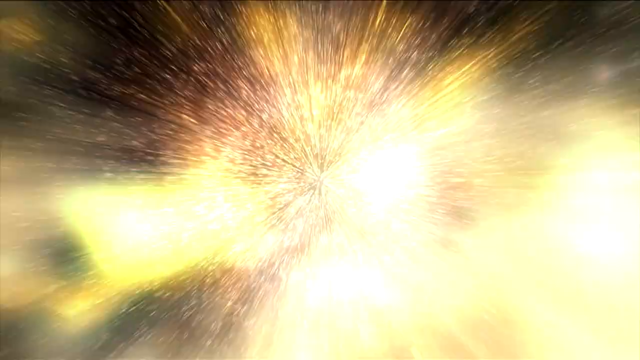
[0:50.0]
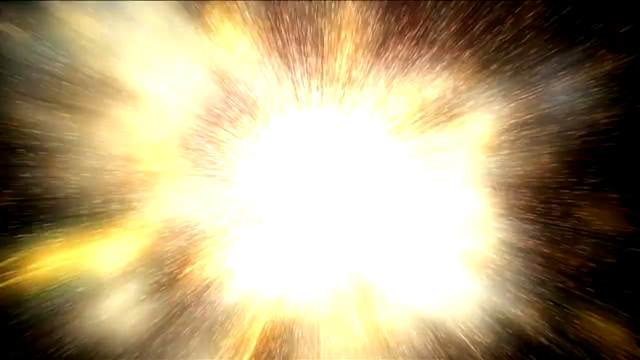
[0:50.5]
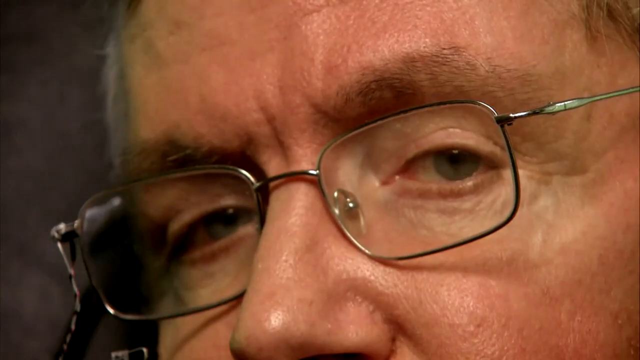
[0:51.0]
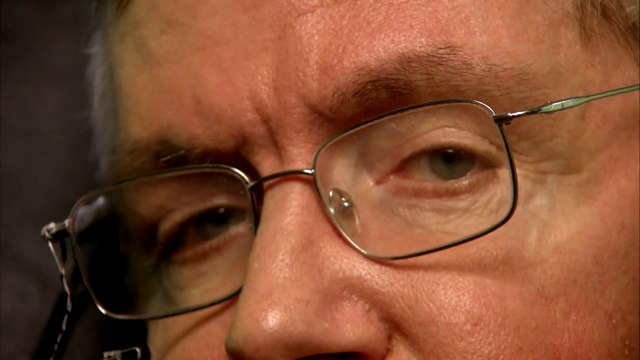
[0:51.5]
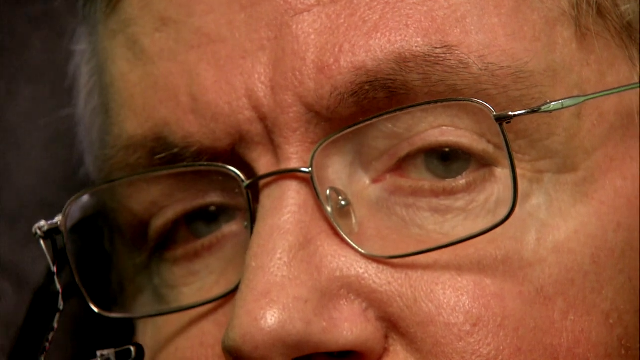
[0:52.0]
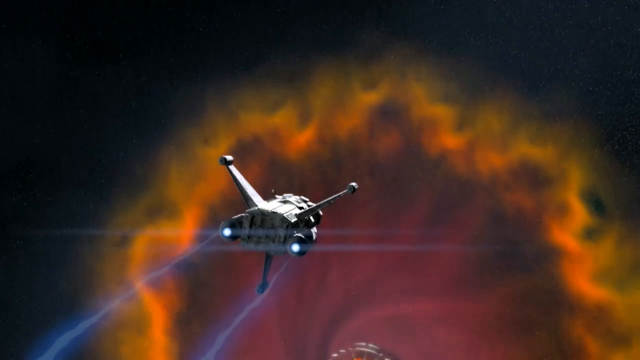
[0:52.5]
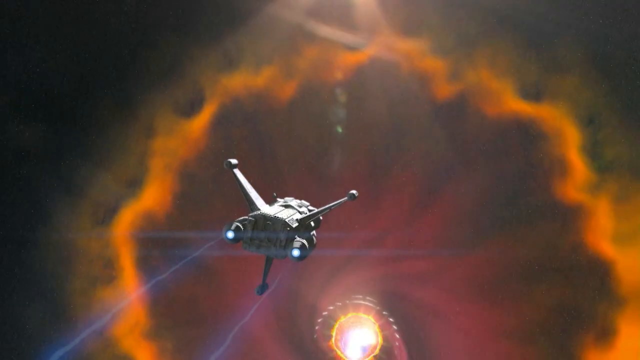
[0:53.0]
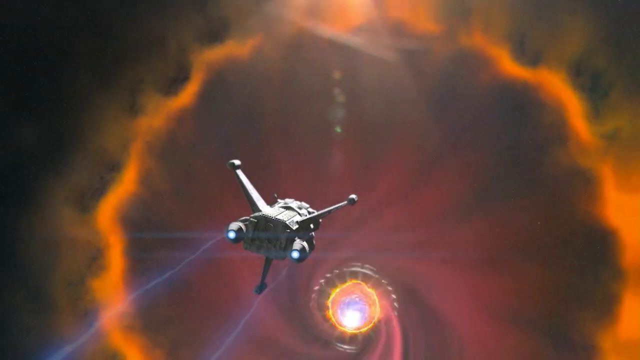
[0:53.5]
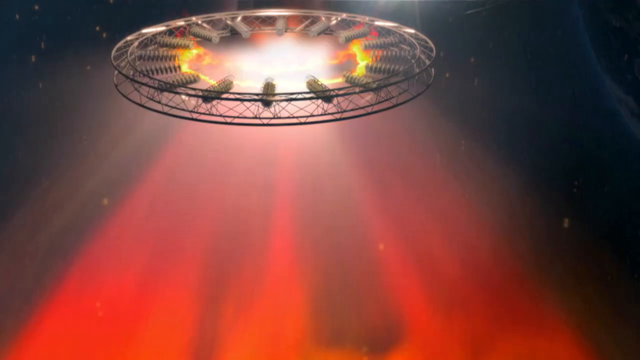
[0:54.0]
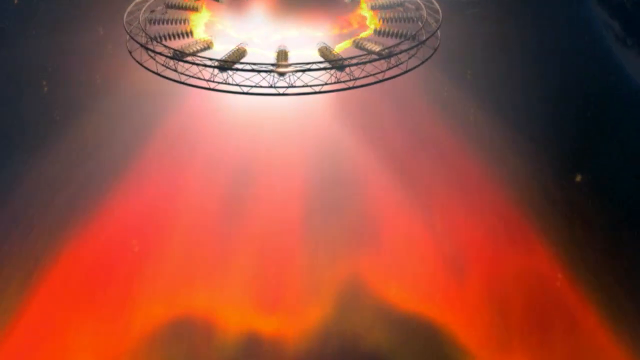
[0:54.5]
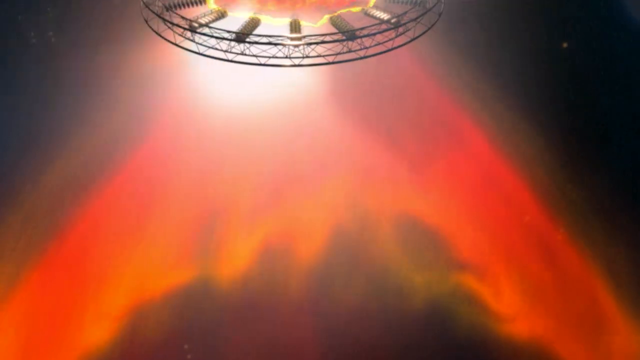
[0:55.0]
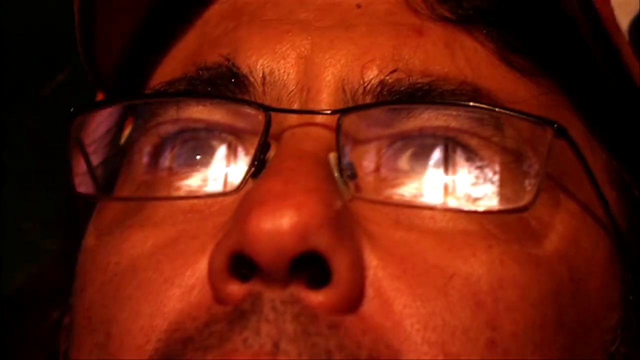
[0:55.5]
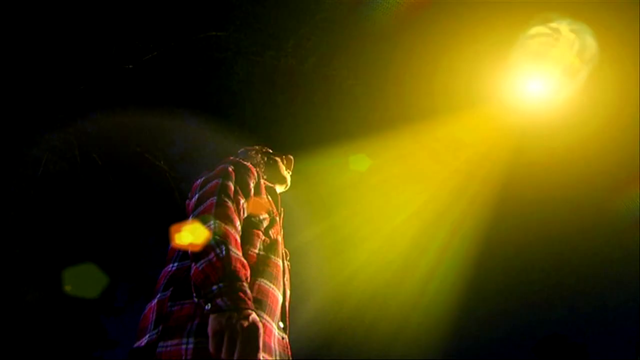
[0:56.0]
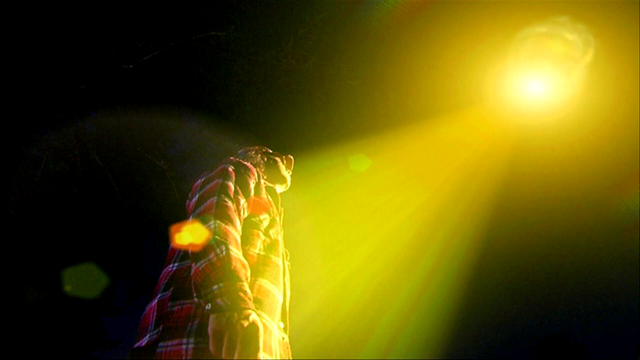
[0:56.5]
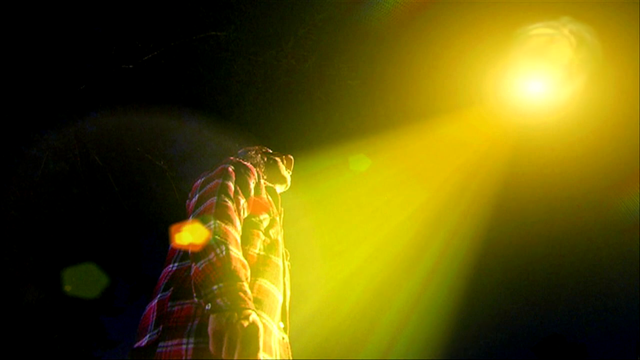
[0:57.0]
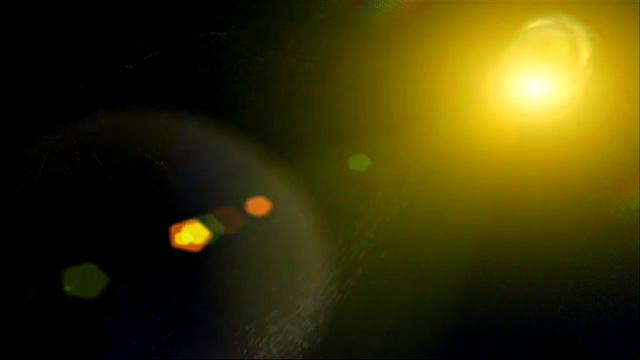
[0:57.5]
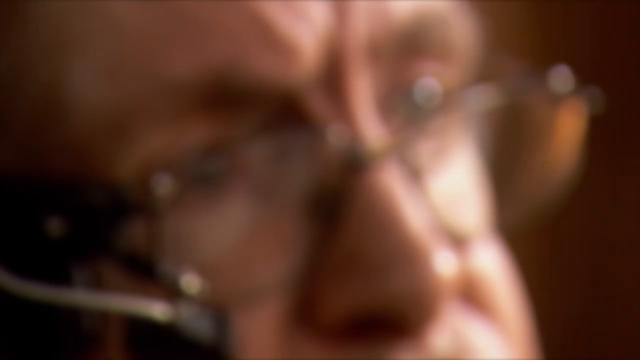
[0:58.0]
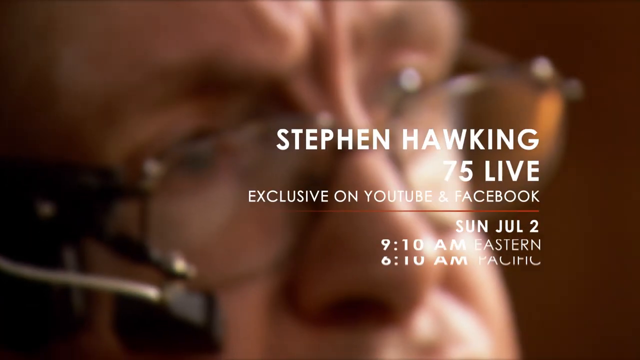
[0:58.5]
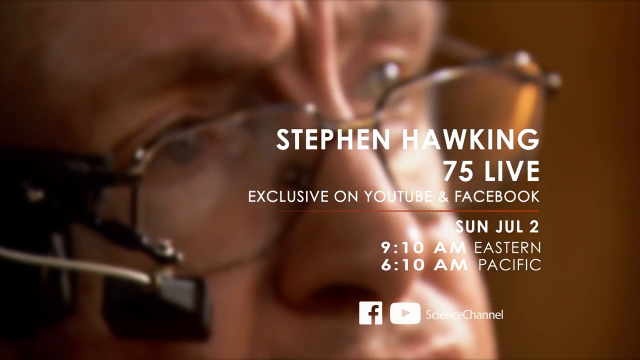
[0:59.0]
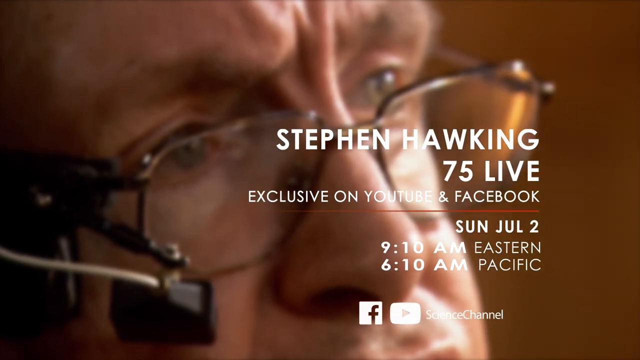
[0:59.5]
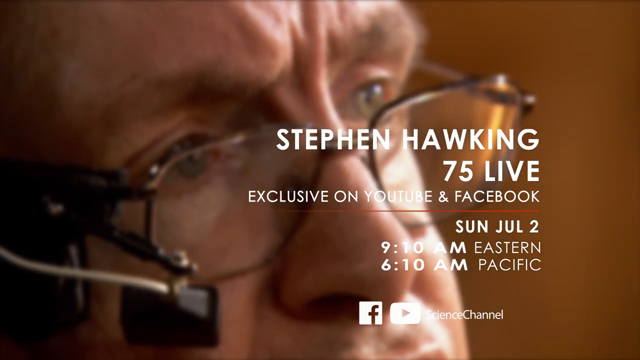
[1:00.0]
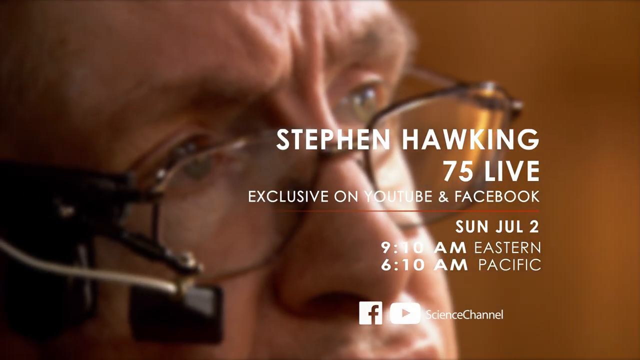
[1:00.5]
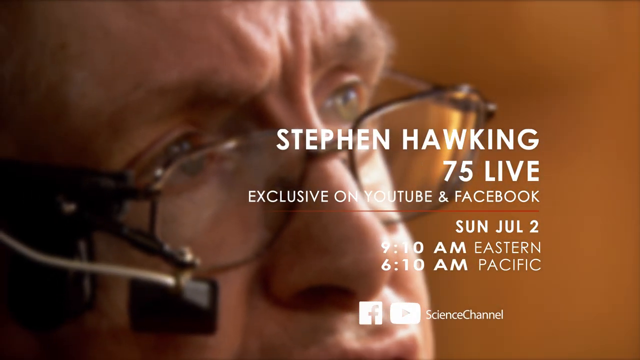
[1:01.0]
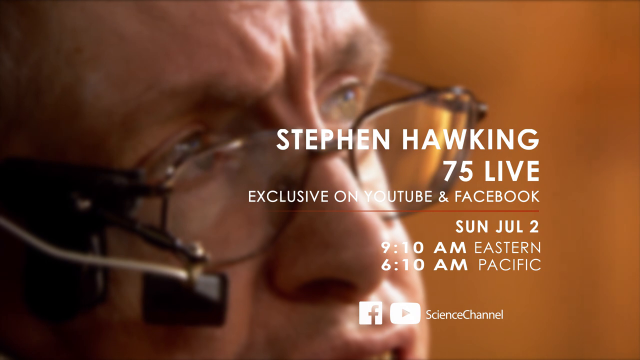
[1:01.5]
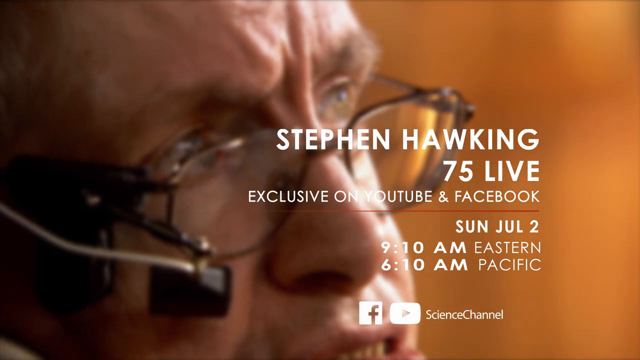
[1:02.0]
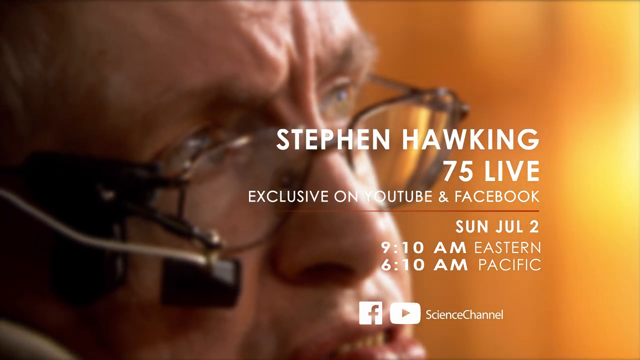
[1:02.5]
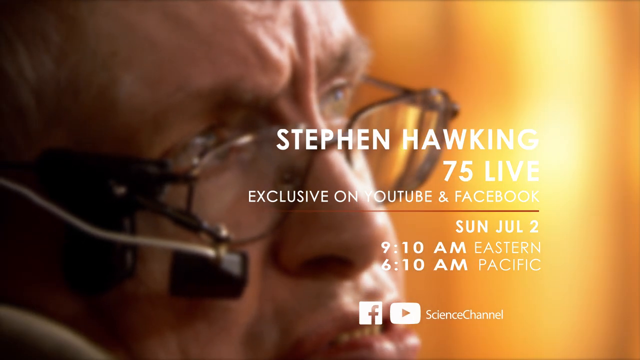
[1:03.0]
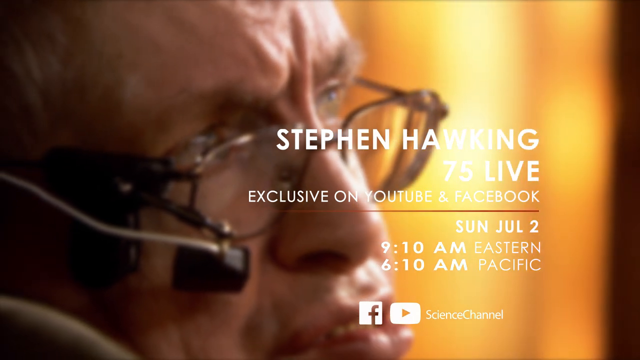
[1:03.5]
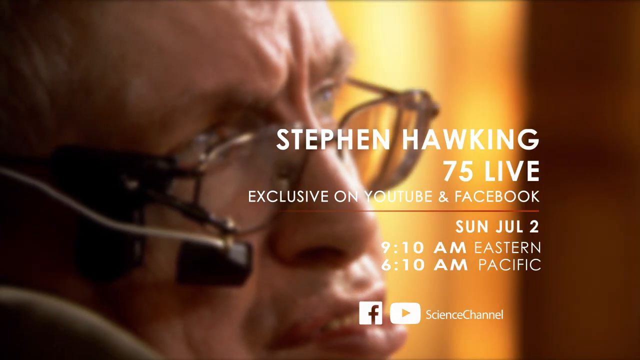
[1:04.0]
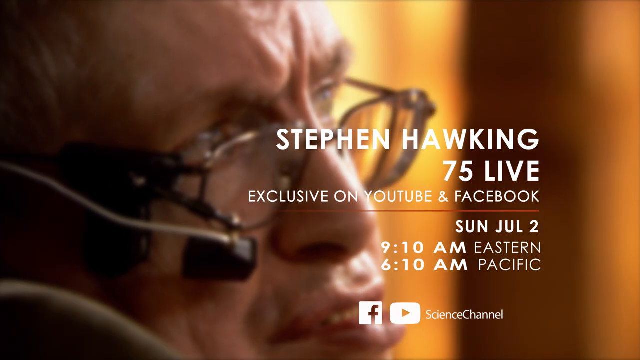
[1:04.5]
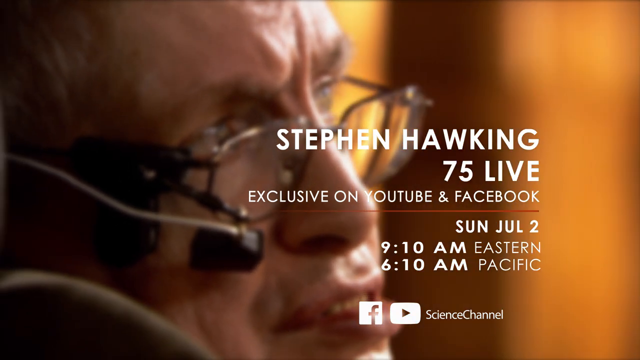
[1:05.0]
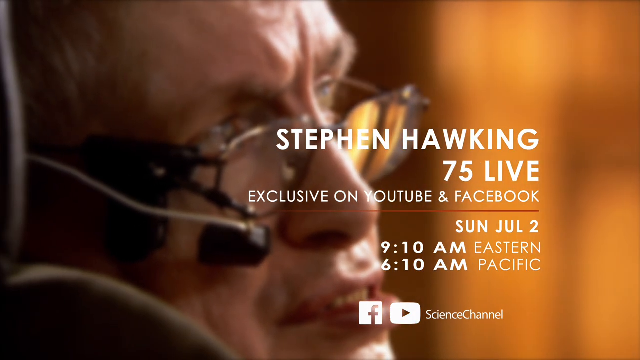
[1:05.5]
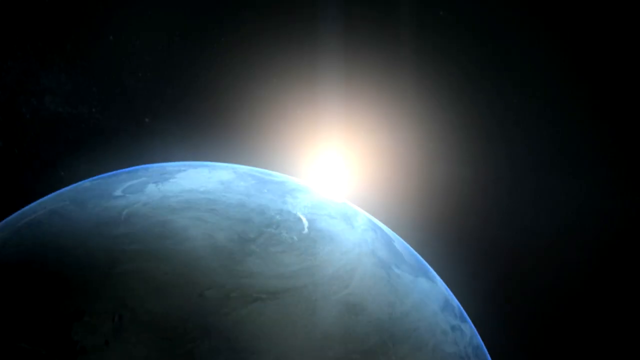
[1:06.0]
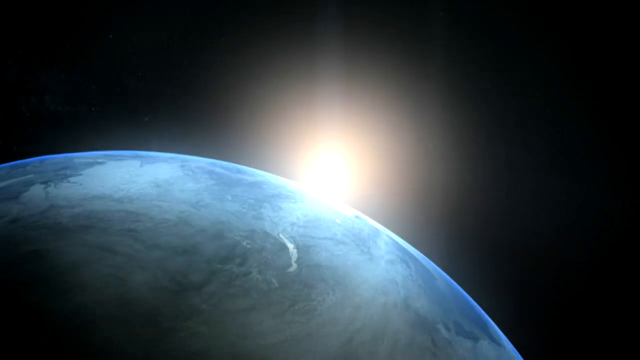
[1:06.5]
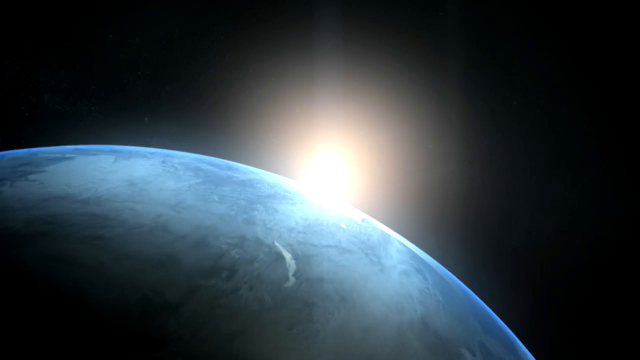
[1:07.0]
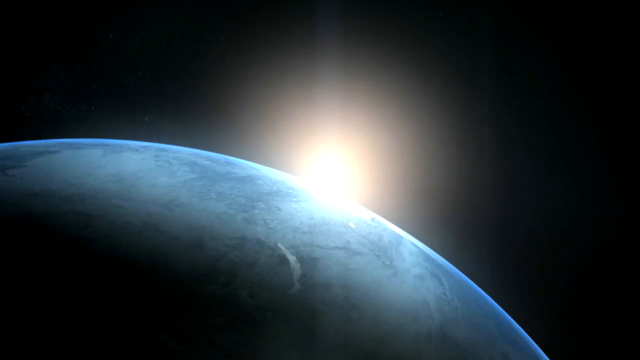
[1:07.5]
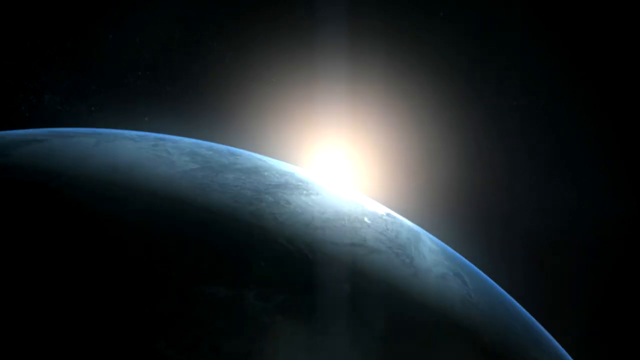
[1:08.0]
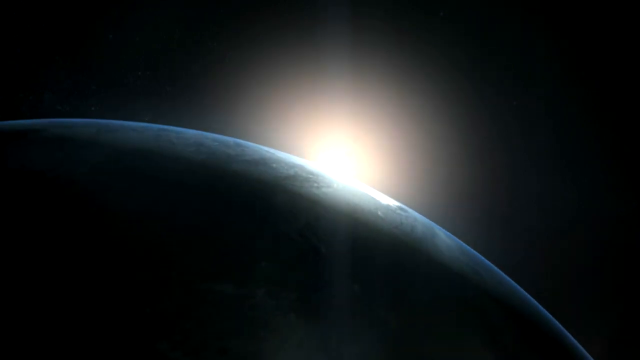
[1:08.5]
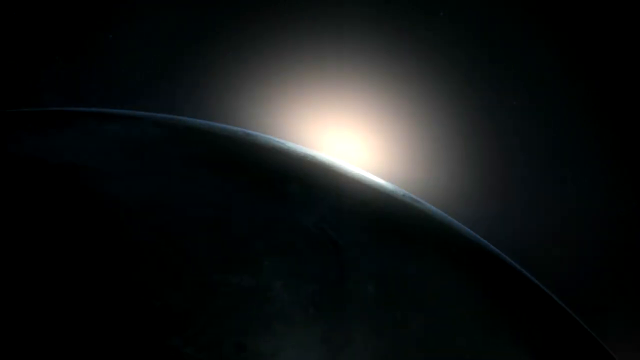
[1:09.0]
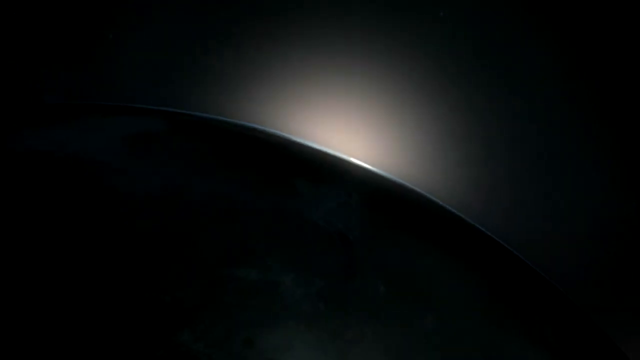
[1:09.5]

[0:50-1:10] Stephen Hawking looks at the camera, and the video appears to show several scenes, including a galaxy exploding within his eyes, before zooming out on his face. It then shows what appears to be a futuristic spaceship flying through a wormhole of some sort, and cuts to a man's face as he wears glasses and some sort of visor cap, followed by an immediate transition to the same man being abducted by a UFO tractor beam. Text on the screen reads "Stephen Hawking 75 live exclusively on YouTube and Facebook Sunday July 2nd at 9 10 a.m. Eastern and 6 10 a.m. Pacific" while a panning shot of his face is shown. The bottom of the screen then reads "science channel" along with their social media name on Facebook and YouTube. Before the video ends, it shows the science channel logo with the planet, as well as a dark cloud enveloping the Earth with the Sun in the background.